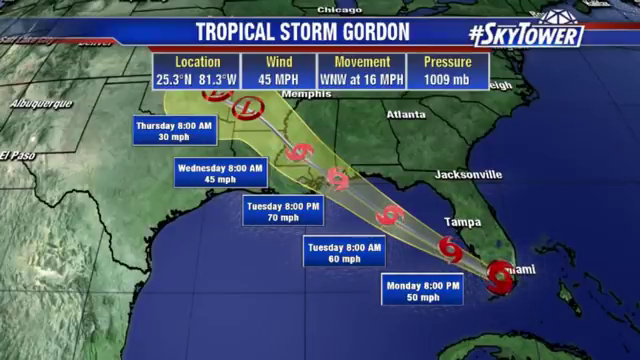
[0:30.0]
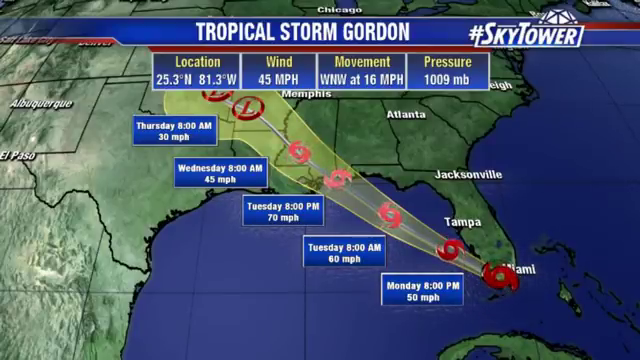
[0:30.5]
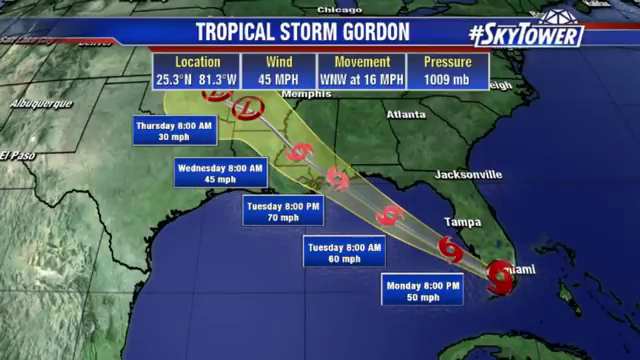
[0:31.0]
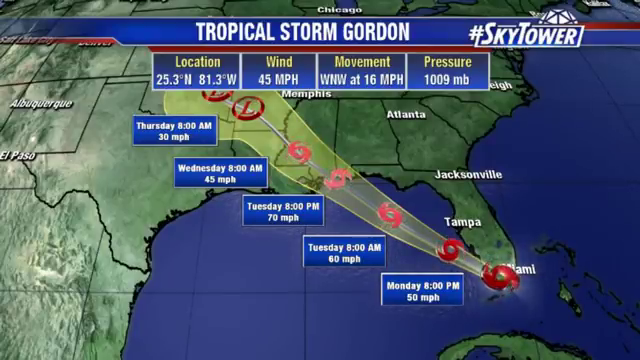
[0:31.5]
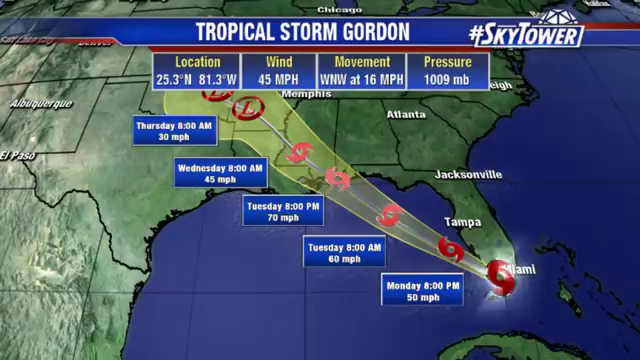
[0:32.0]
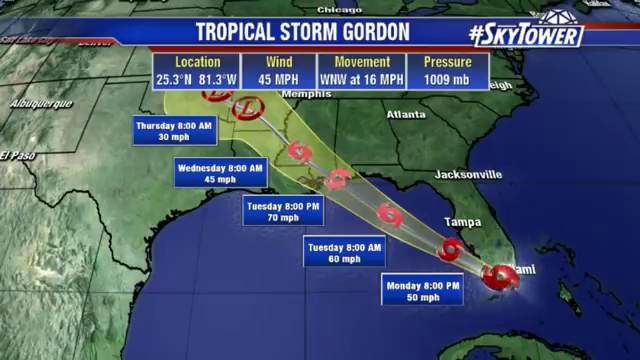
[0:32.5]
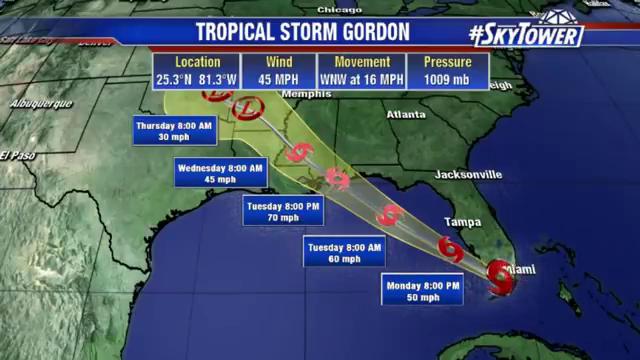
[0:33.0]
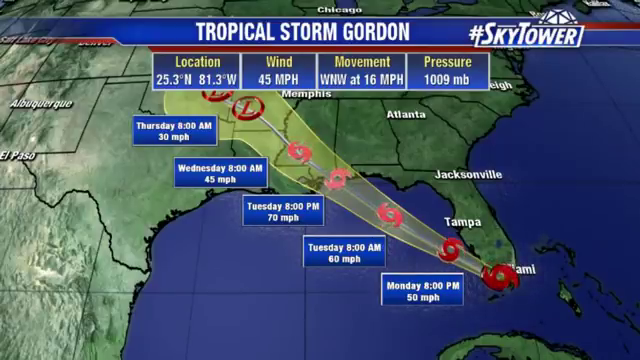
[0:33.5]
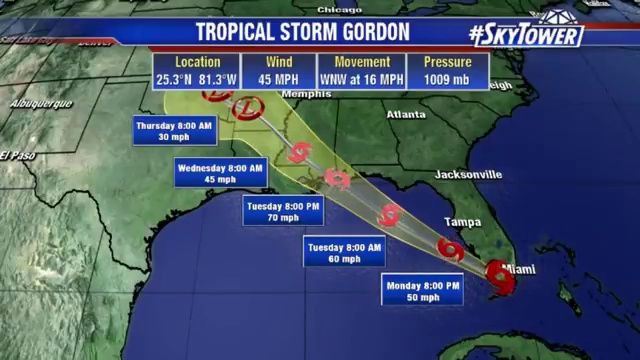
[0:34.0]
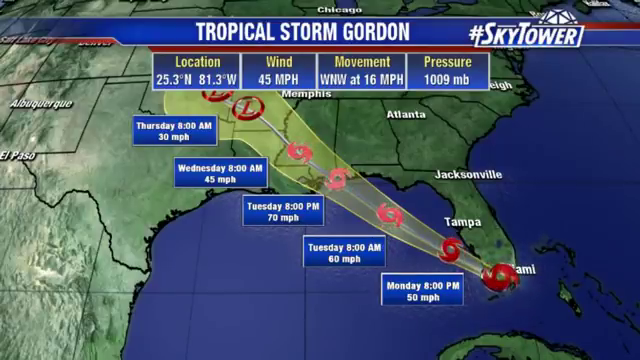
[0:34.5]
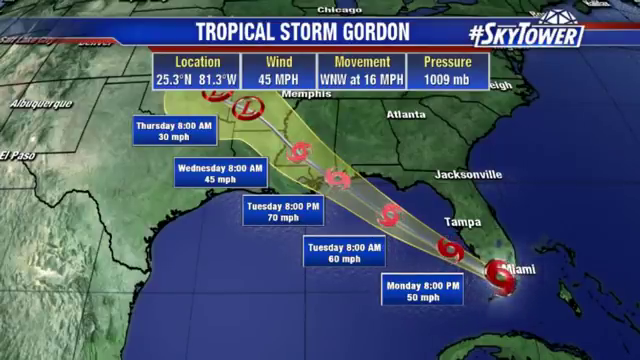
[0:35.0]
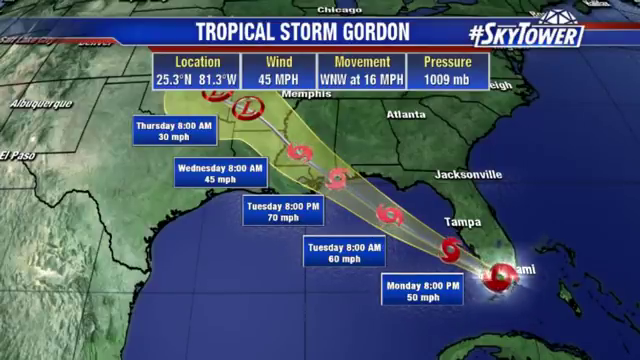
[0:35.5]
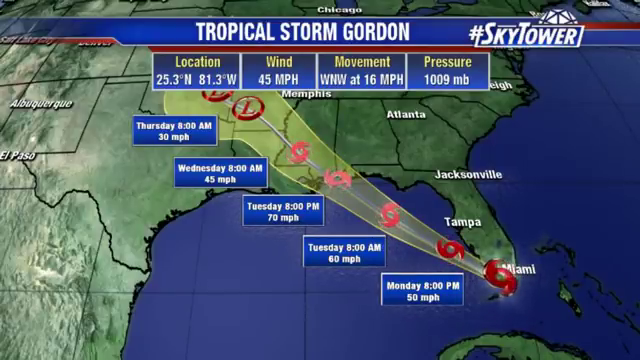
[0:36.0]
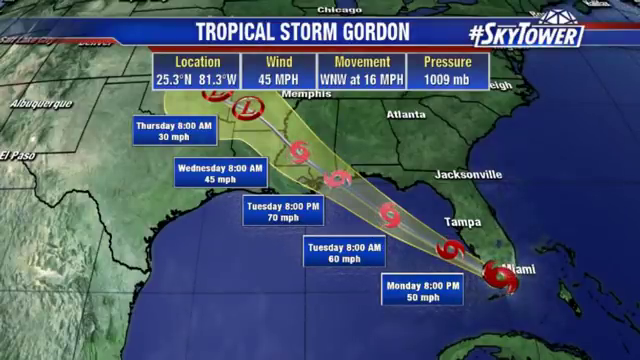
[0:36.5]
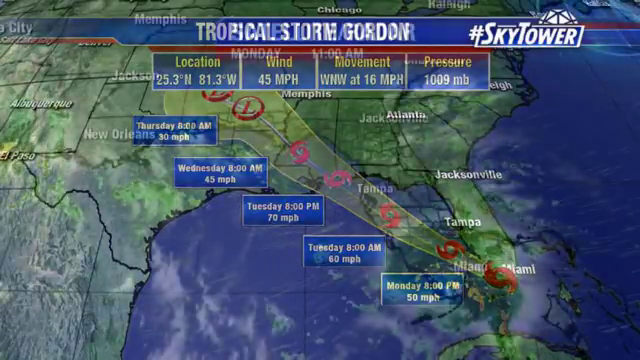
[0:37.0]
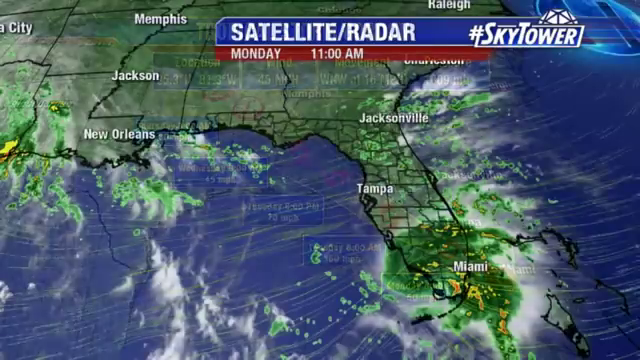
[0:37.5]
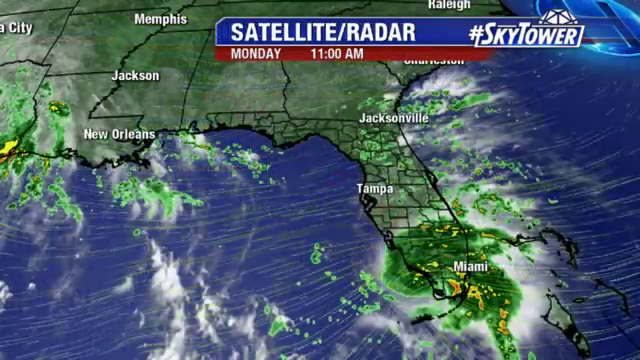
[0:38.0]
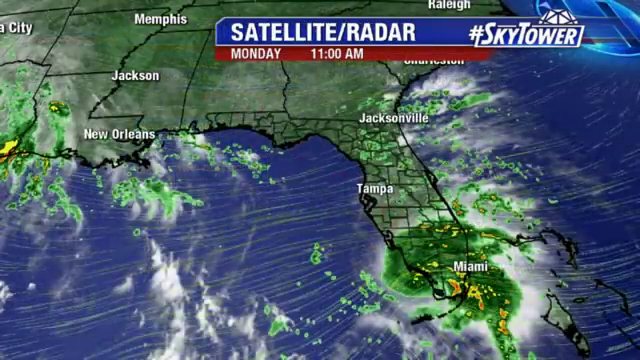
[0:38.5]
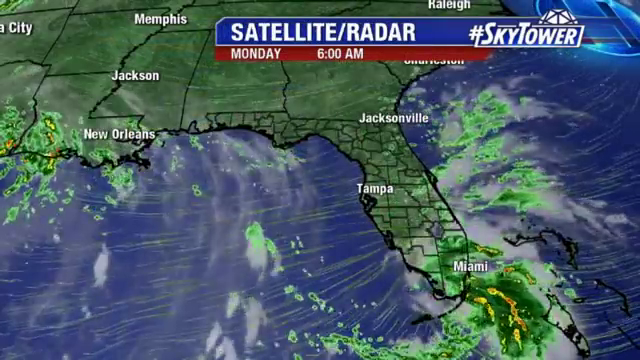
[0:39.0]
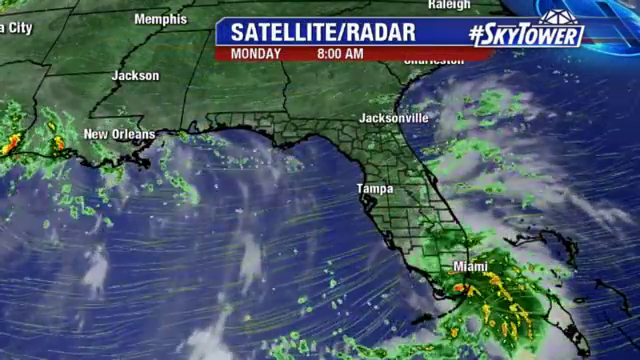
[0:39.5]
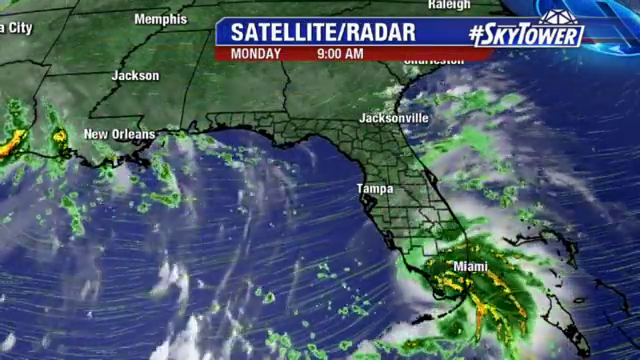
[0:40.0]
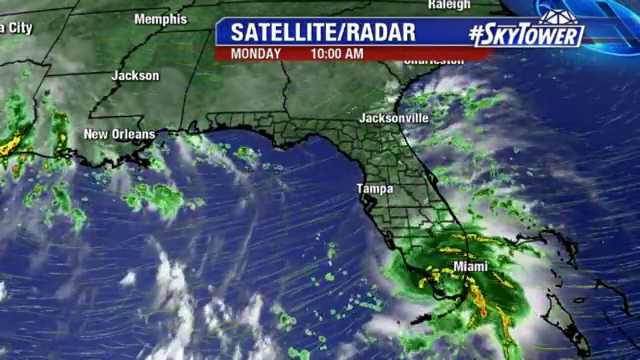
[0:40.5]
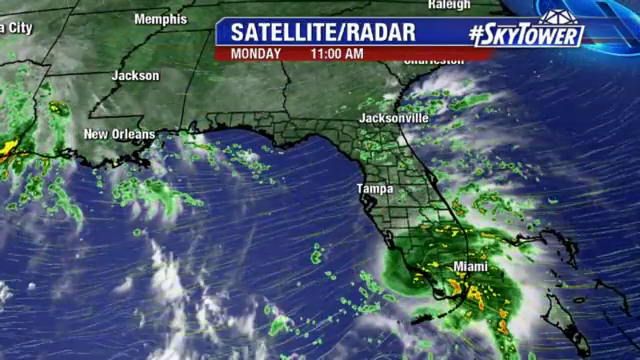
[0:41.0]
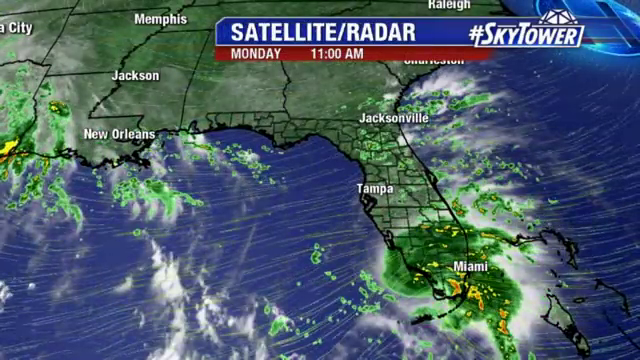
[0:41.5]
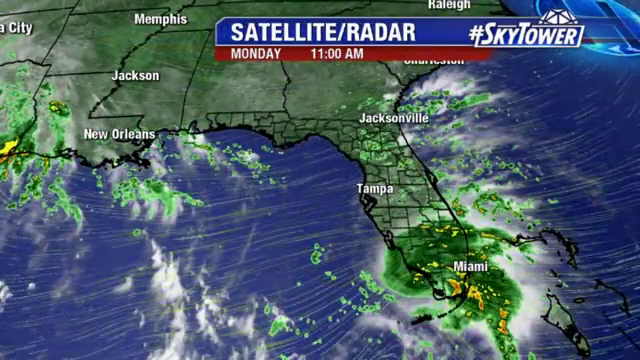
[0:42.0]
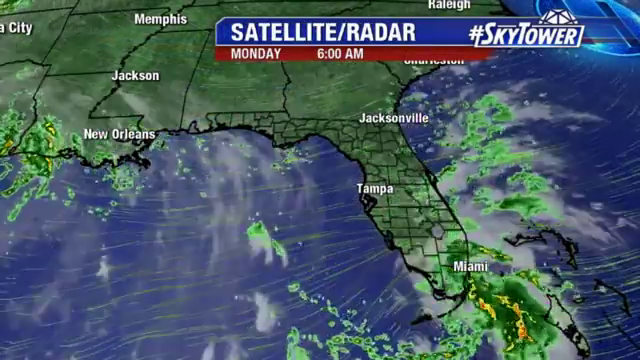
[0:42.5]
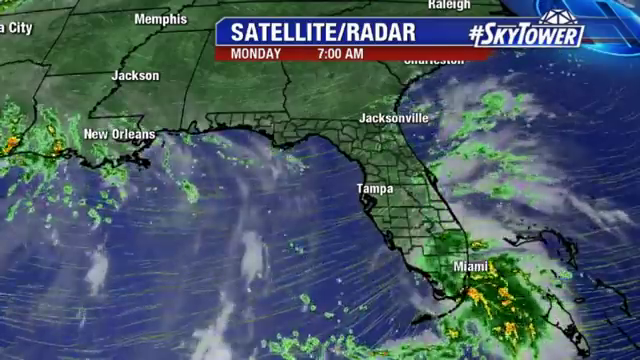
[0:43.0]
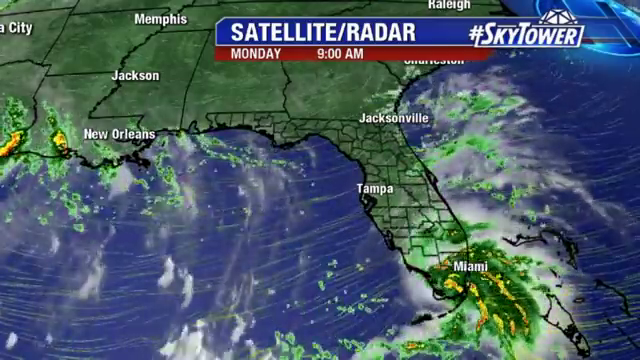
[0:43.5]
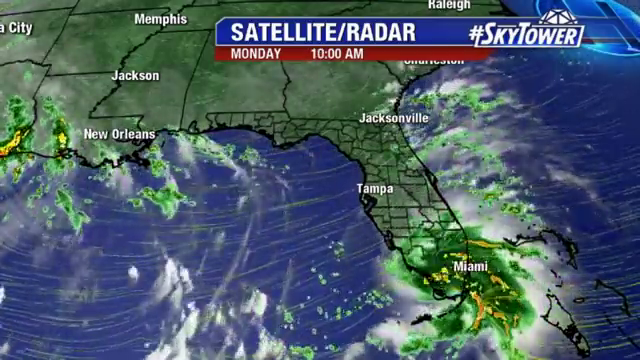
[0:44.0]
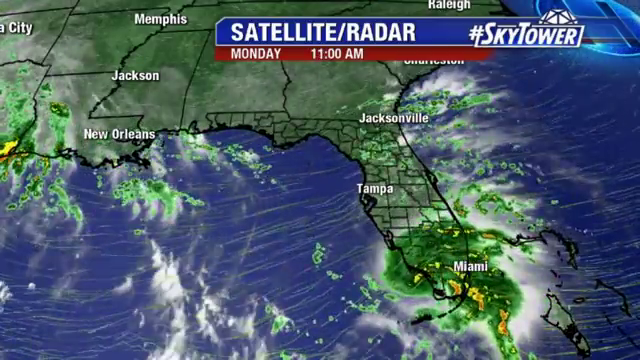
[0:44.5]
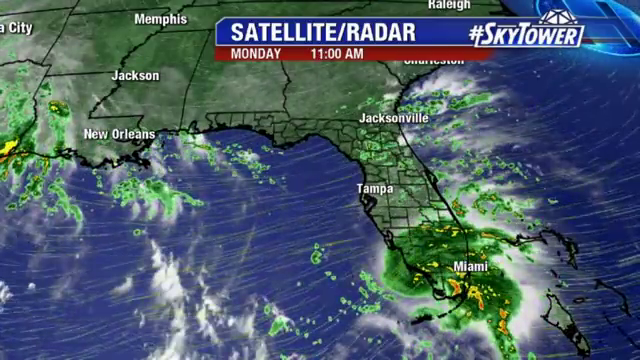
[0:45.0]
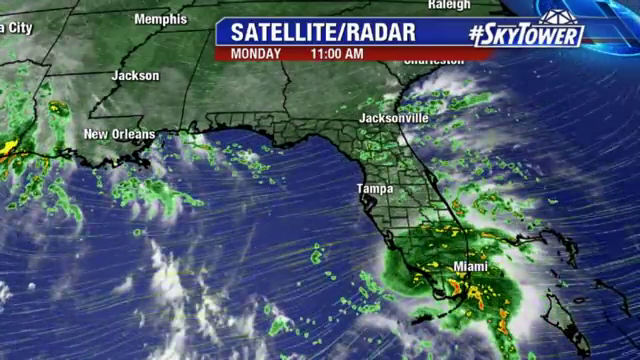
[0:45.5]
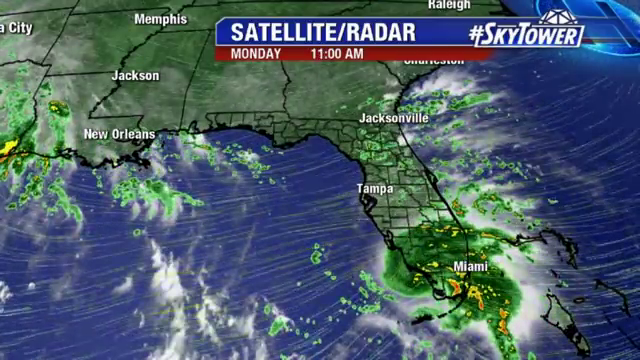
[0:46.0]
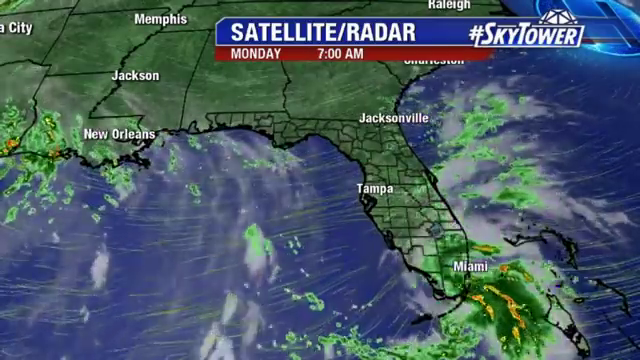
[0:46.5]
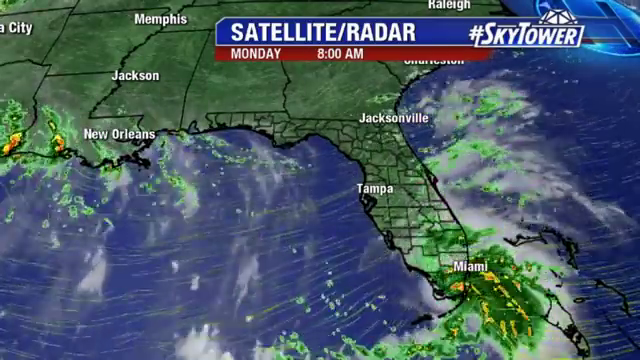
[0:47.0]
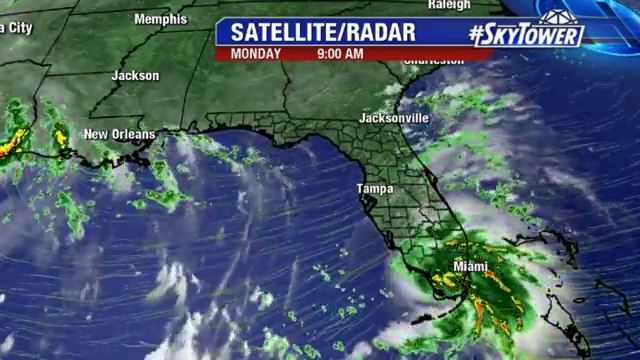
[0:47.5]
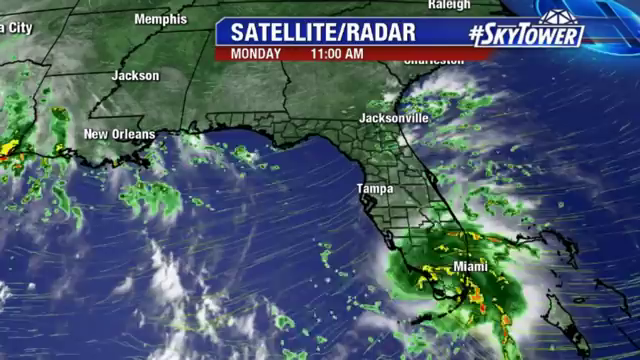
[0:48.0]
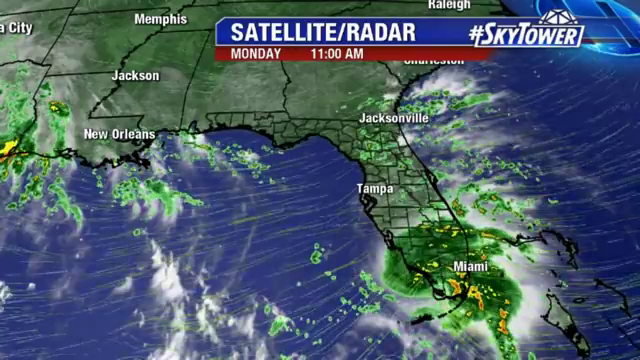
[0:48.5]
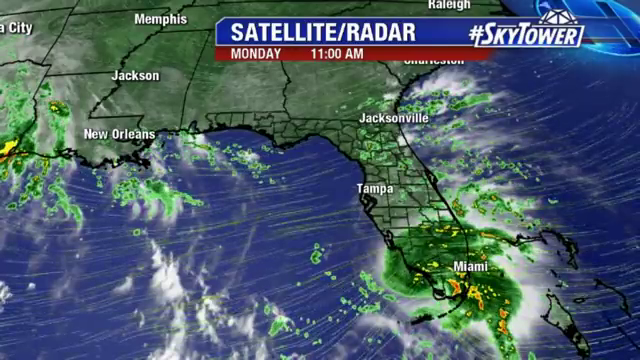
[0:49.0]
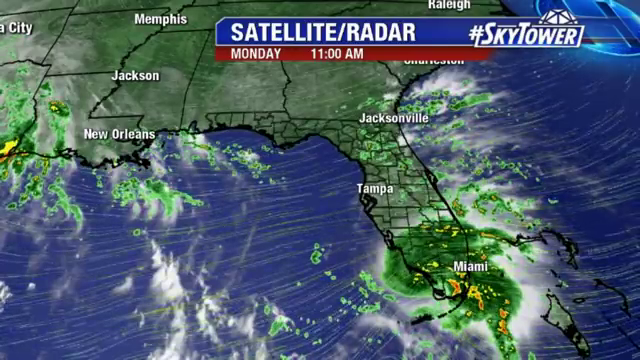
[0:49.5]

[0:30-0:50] A weather map fills the video, with "Tropical Storm Gordon" at the top. A twisty symbol that looks like a hurricane or storm starts off at South Florida, moves across the Gulf, enters at Mississippi, and then goes up into a low system heading into the South, toward states like Arkansas and Oklahoma. The little hurricane/tropical storm symbols on the graphic spin counterclockwise. After a few seconds, an actual radar appears showing what the storm is currently doing, spinning over South Florida, with many jet stream and ocean wave patterns. The radar appears to be the kind that projects where the storm is moving in the future; a box at the top shows the time changing as it advances into the future. Then the view returns to the original map again.